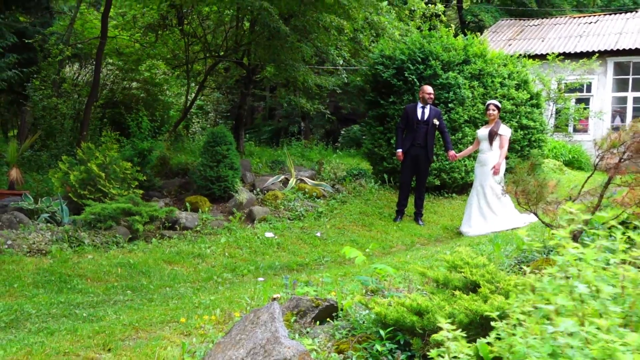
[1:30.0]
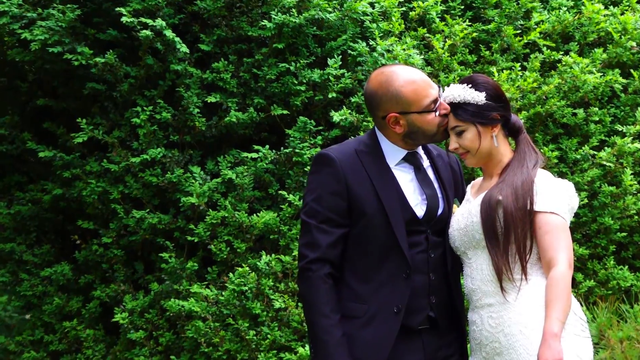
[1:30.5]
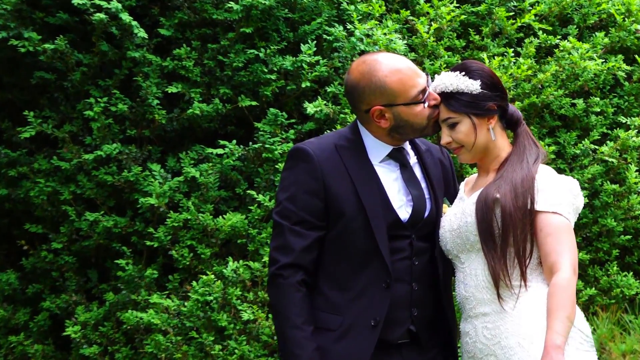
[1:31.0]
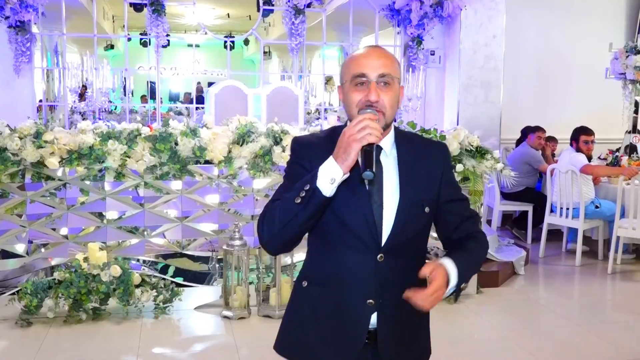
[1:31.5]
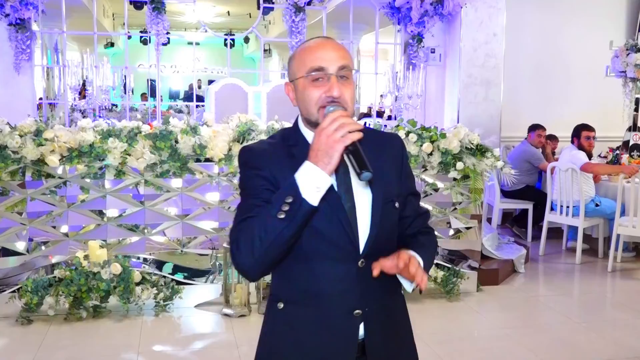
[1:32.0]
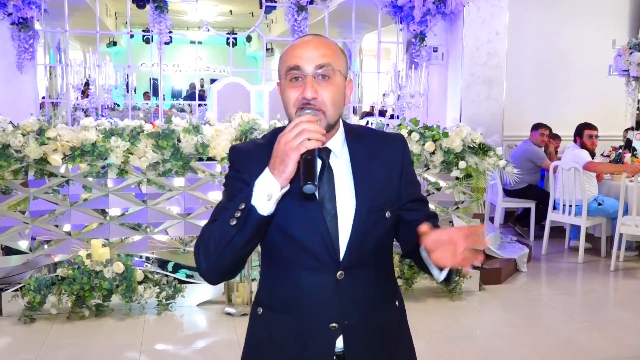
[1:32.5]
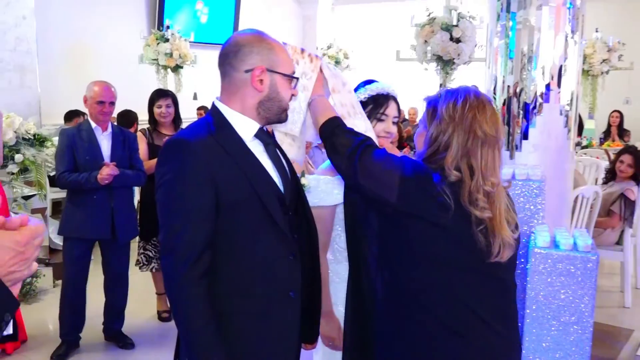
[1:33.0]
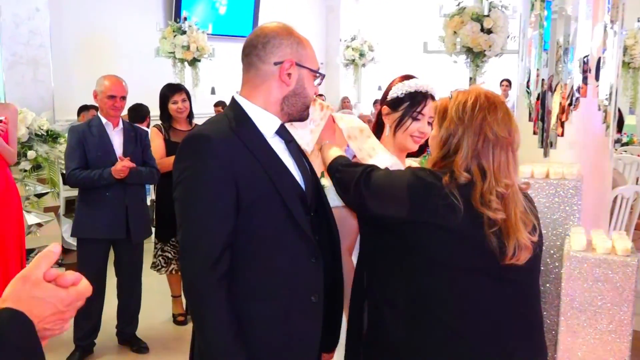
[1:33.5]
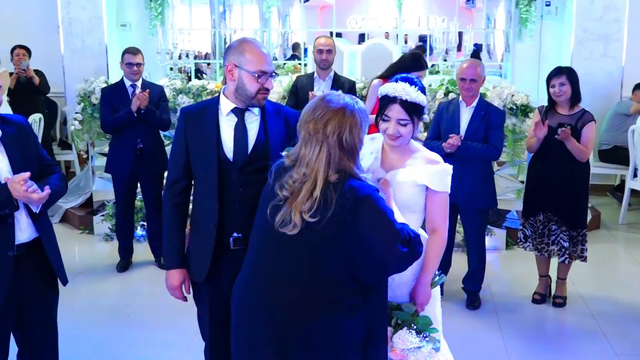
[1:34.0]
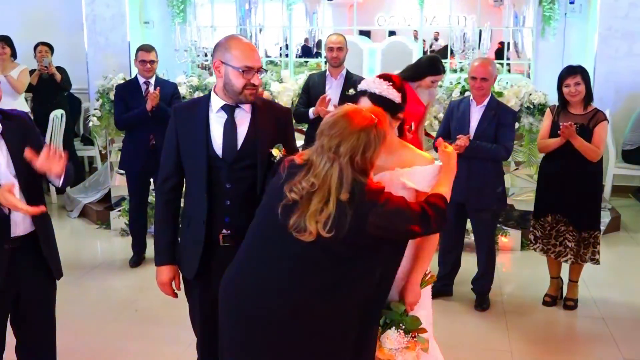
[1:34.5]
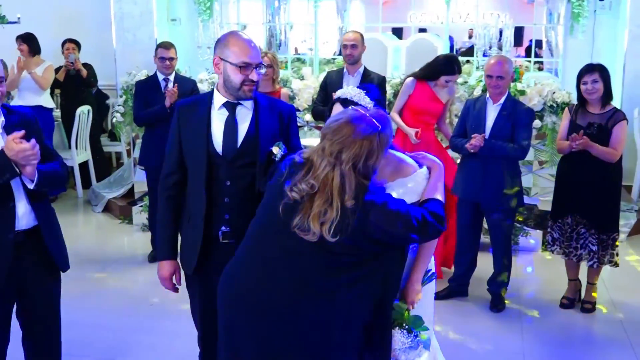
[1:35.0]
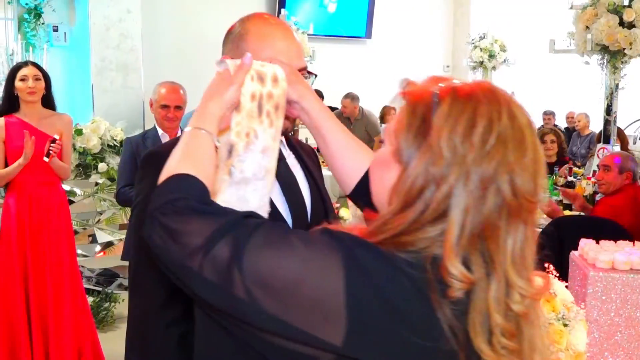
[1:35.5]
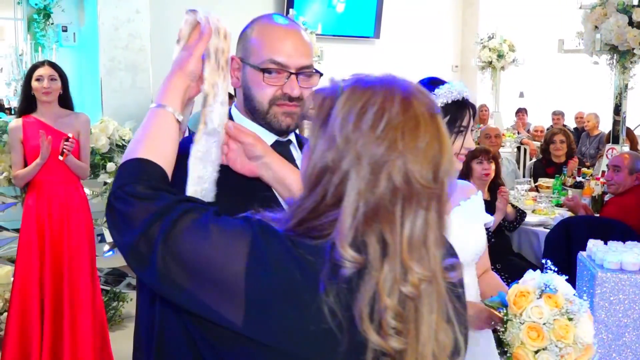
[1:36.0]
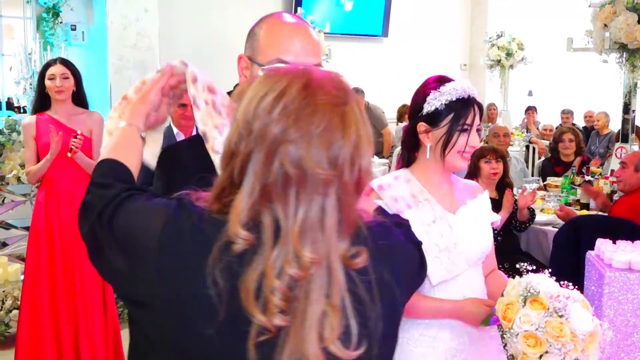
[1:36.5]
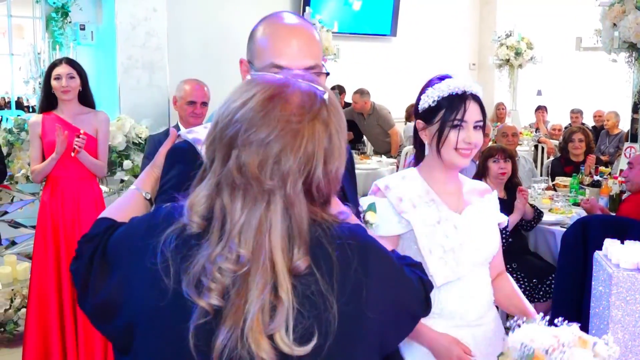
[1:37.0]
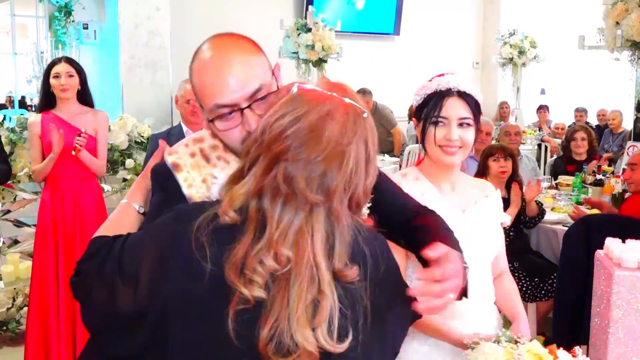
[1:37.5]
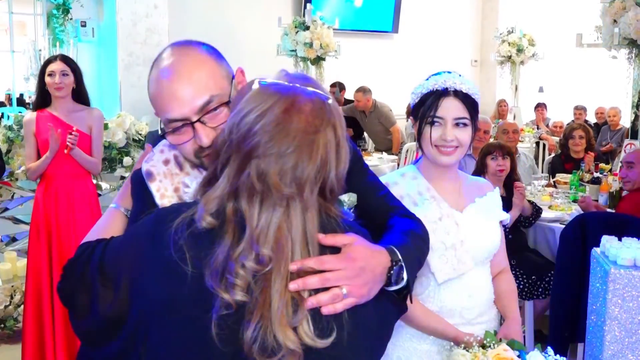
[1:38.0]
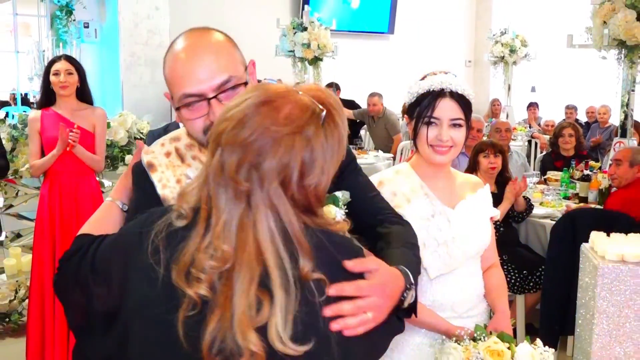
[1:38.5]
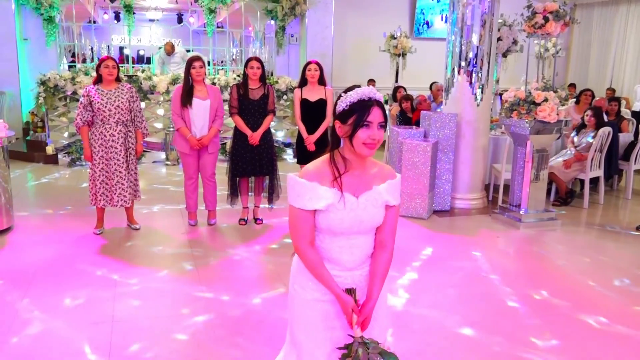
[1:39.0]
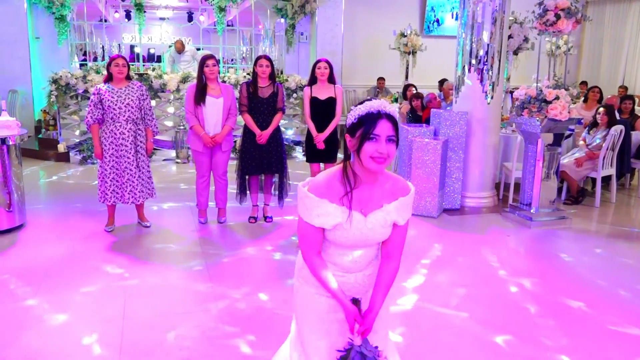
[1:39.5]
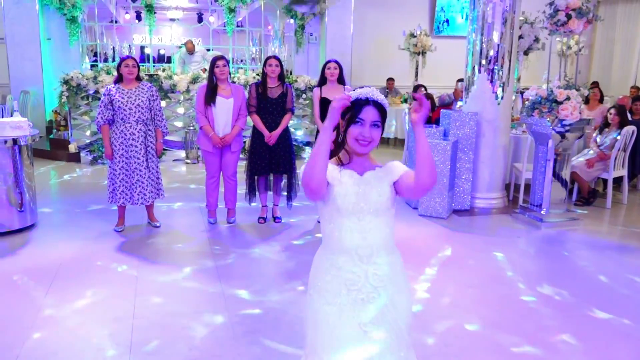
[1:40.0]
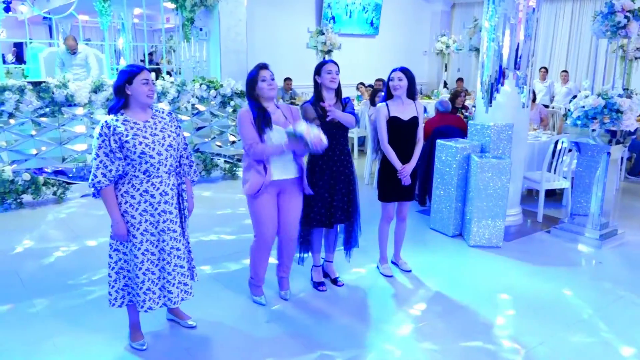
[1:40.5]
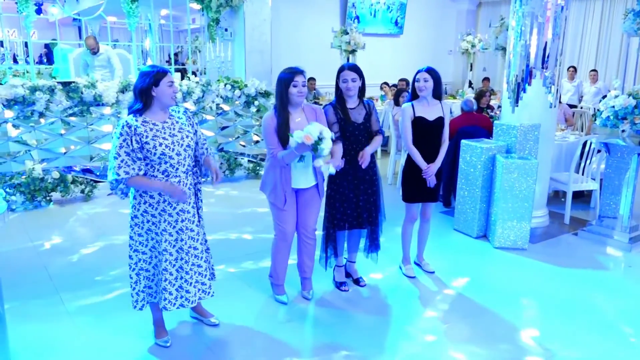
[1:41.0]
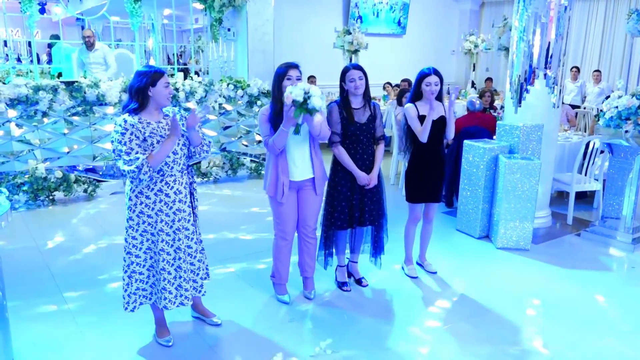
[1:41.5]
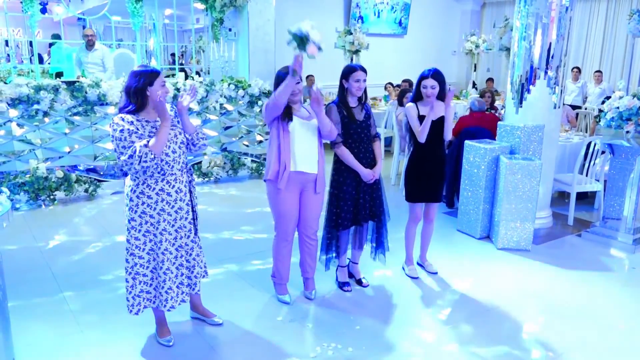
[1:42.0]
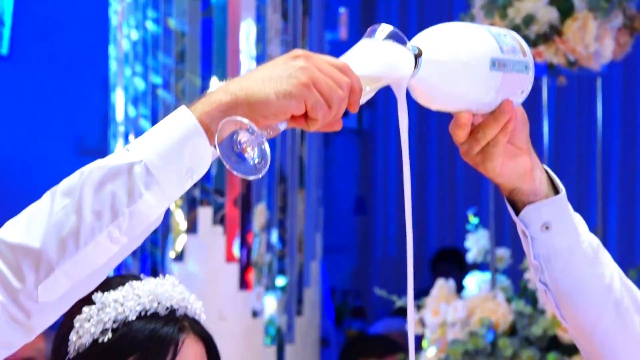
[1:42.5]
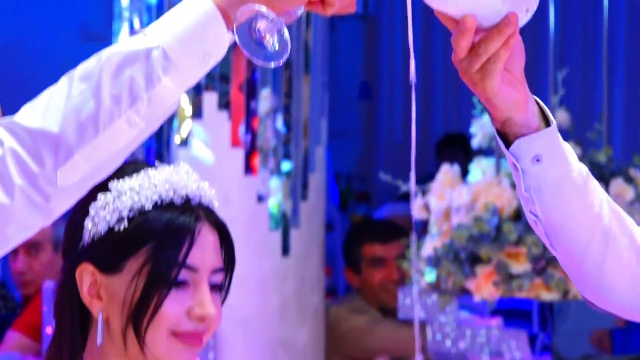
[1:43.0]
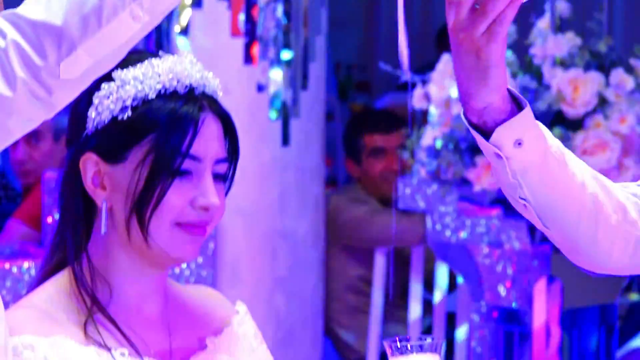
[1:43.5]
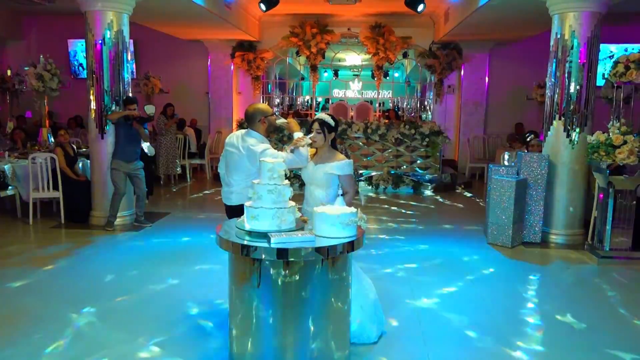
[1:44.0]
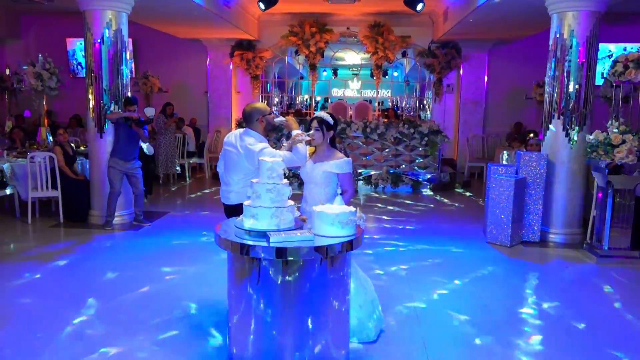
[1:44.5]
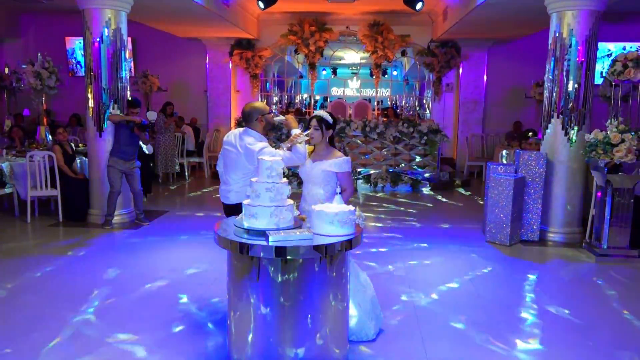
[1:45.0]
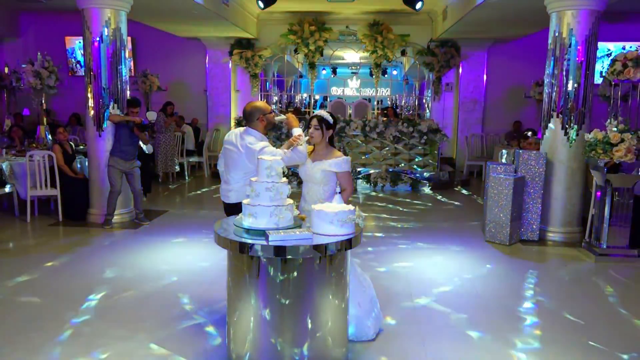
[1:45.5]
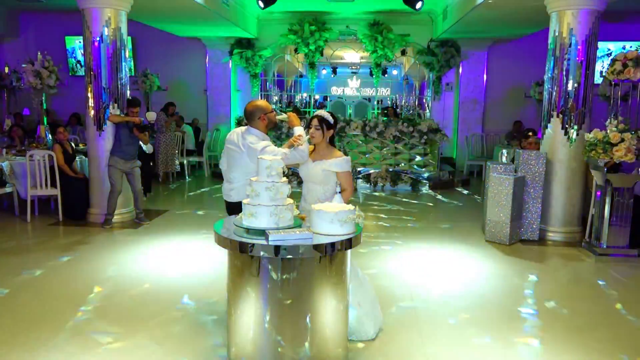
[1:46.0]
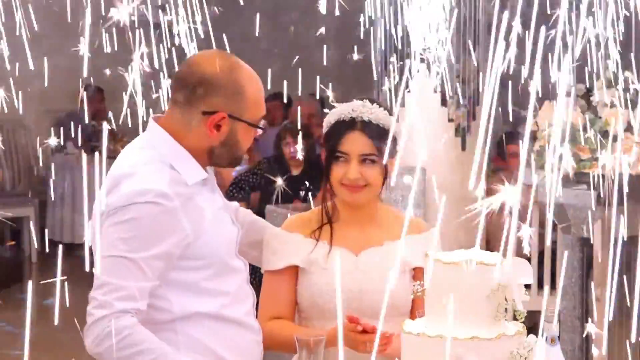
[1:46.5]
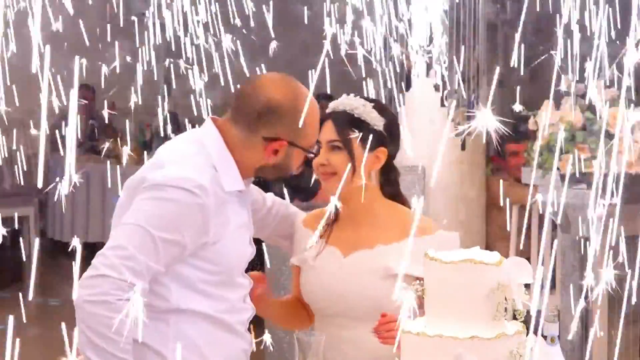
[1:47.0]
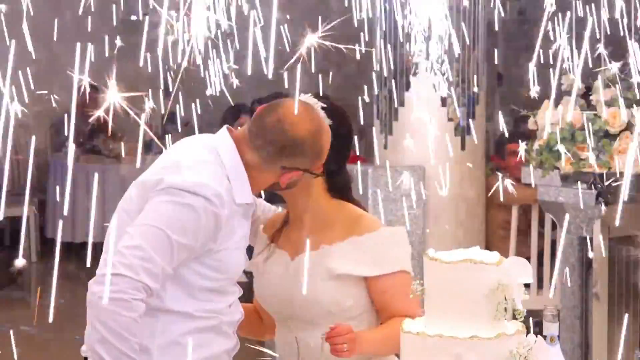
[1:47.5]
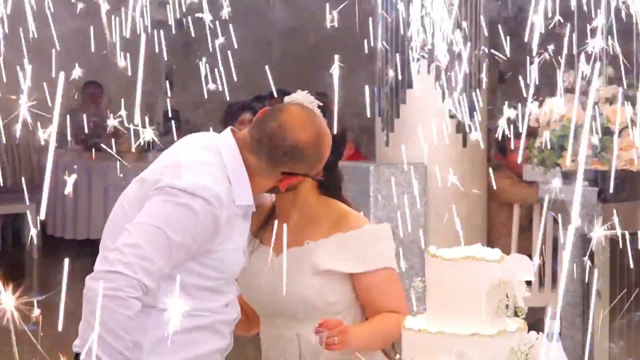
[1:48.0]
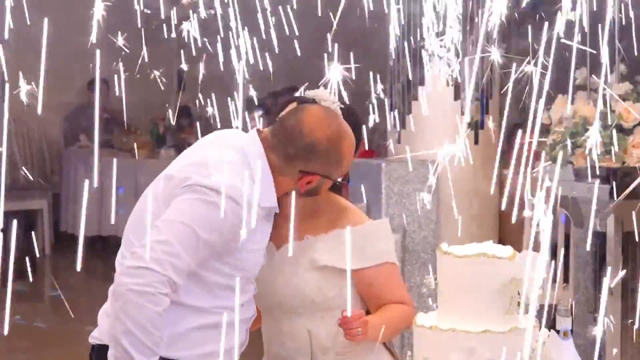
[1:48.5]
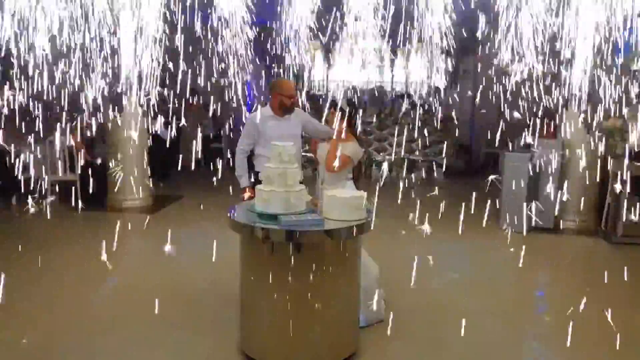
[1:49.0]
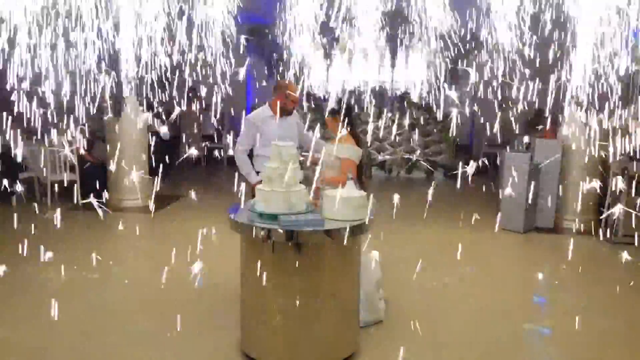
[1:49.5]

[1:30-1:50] A person puts something together. The lady then throws her flowers toward a lady behind her. A person talks into a microphone while a lot of people watch. There is a cake and a lot of lights, and the cake is cut, possibly as a wedding ritual.